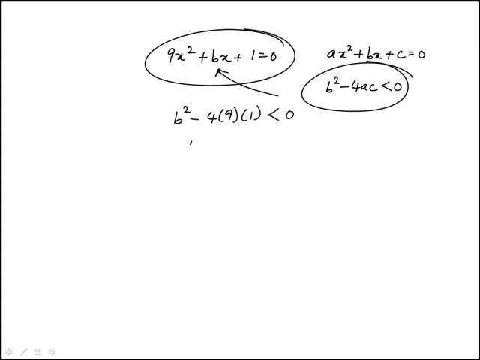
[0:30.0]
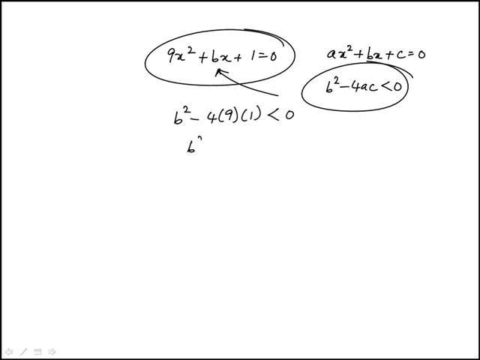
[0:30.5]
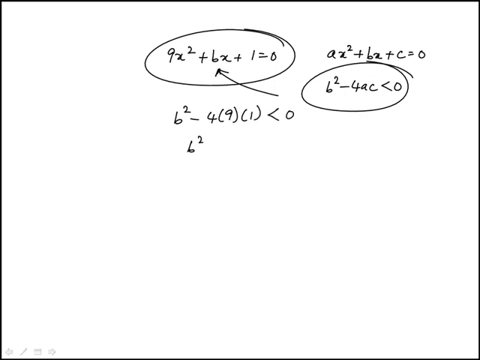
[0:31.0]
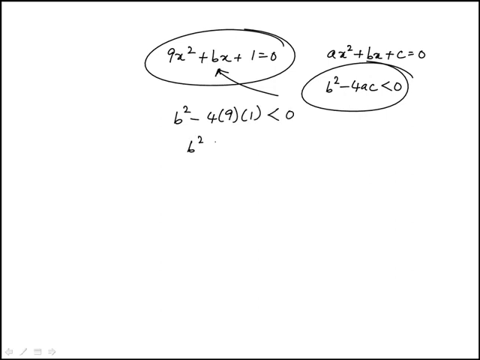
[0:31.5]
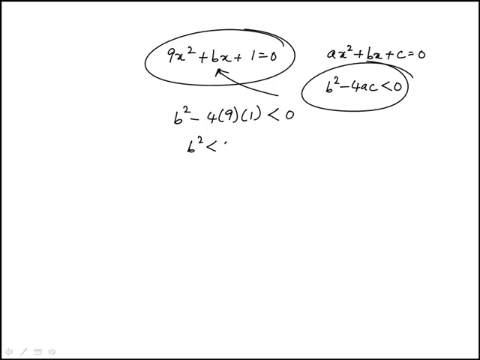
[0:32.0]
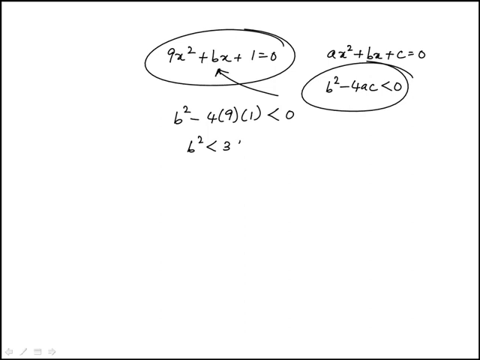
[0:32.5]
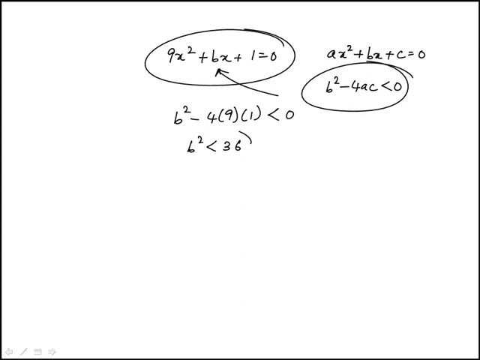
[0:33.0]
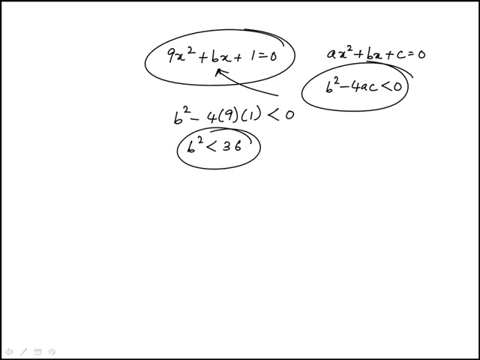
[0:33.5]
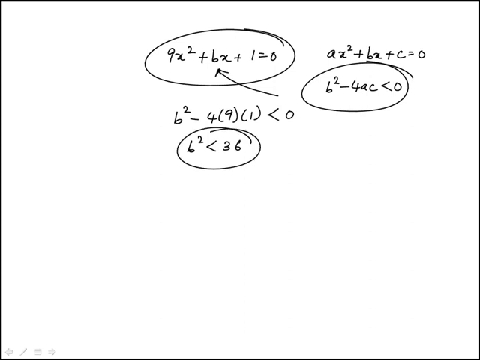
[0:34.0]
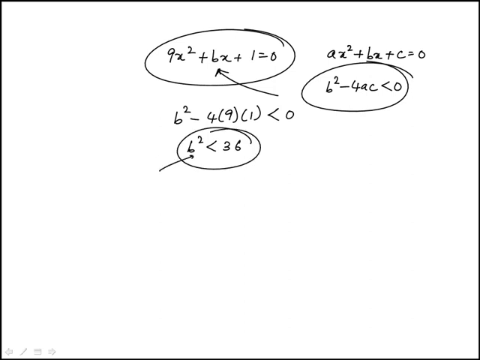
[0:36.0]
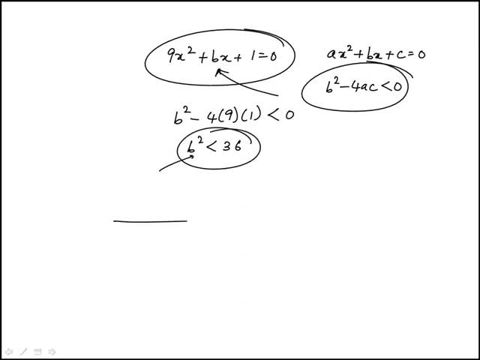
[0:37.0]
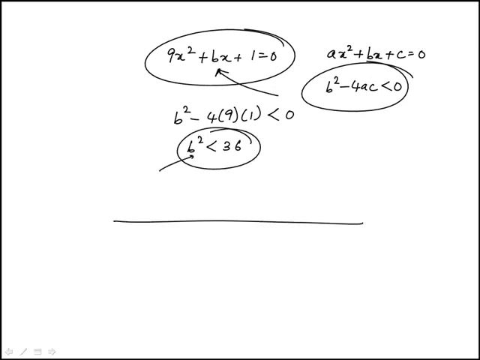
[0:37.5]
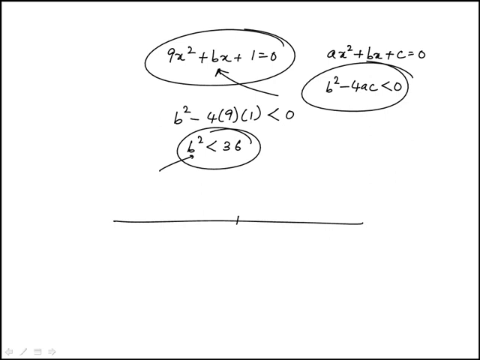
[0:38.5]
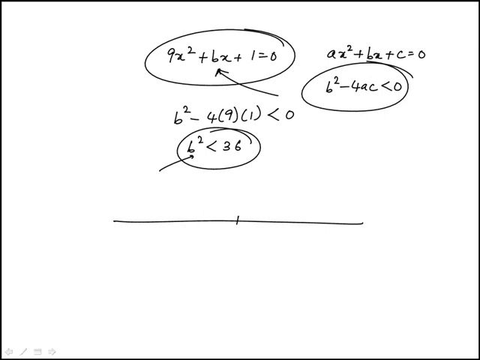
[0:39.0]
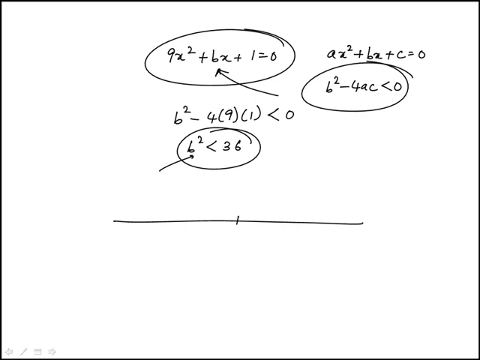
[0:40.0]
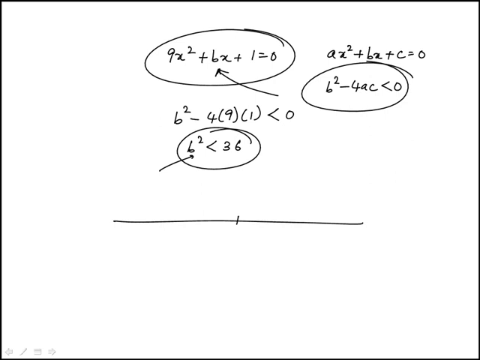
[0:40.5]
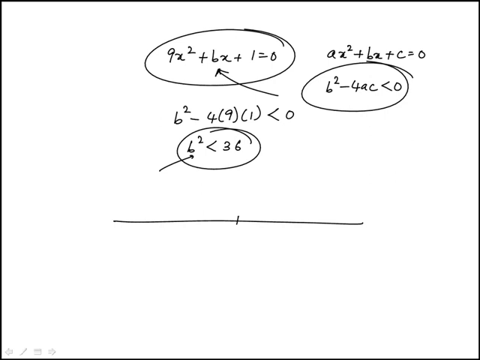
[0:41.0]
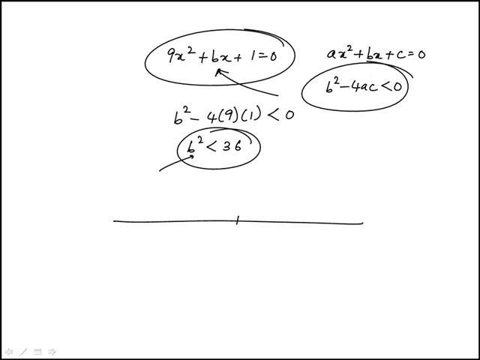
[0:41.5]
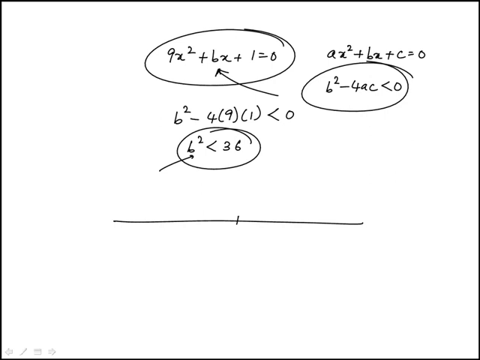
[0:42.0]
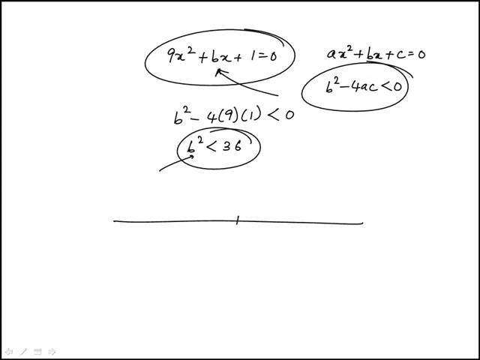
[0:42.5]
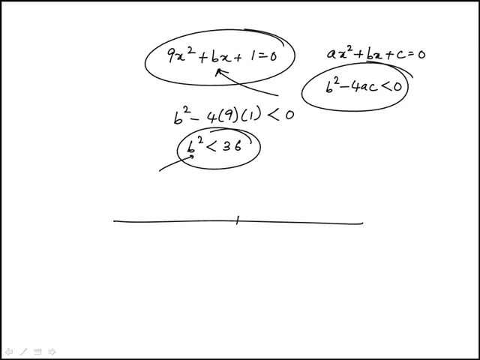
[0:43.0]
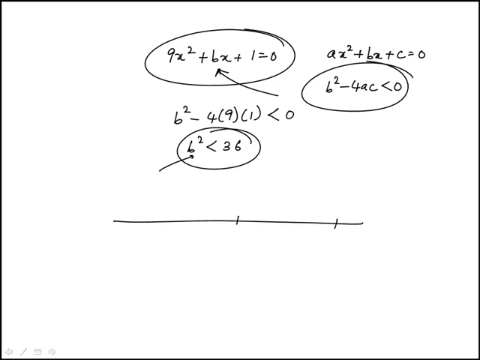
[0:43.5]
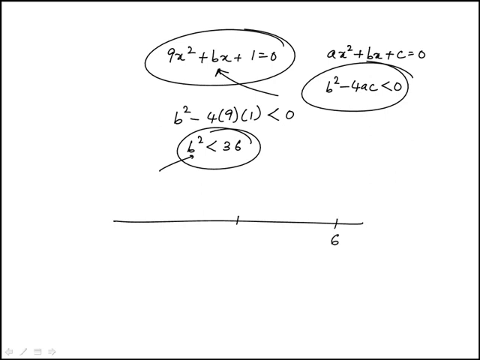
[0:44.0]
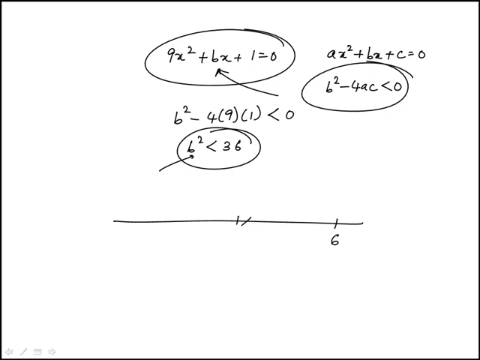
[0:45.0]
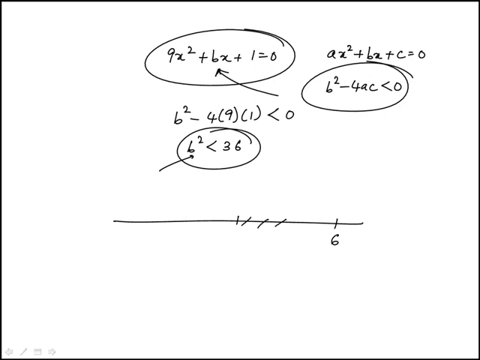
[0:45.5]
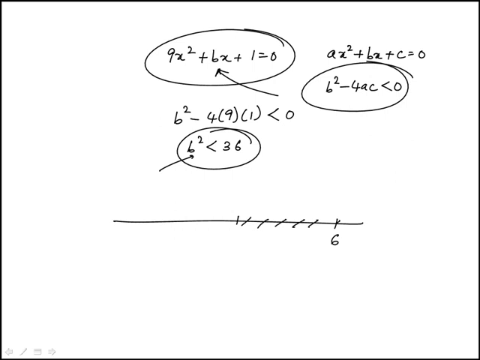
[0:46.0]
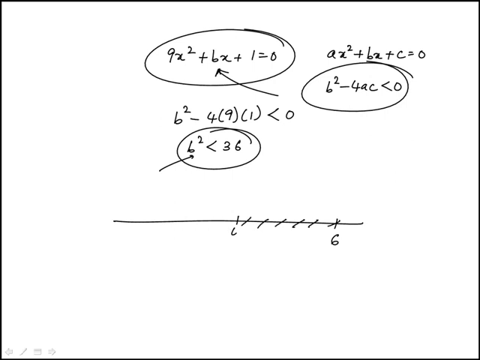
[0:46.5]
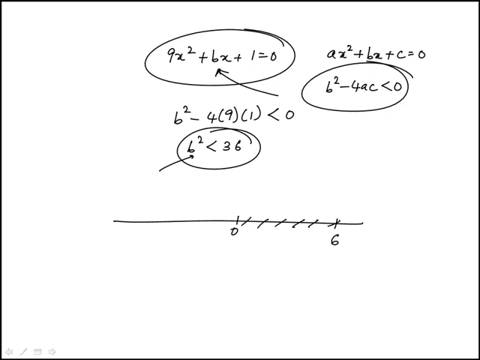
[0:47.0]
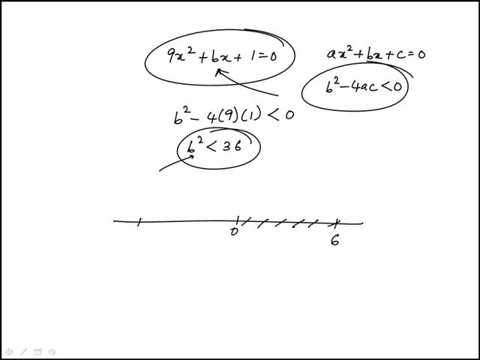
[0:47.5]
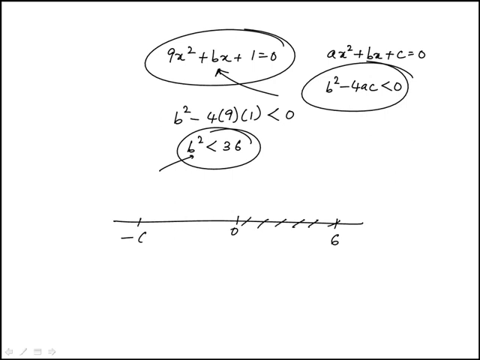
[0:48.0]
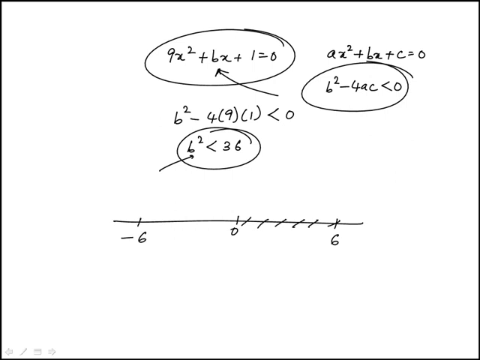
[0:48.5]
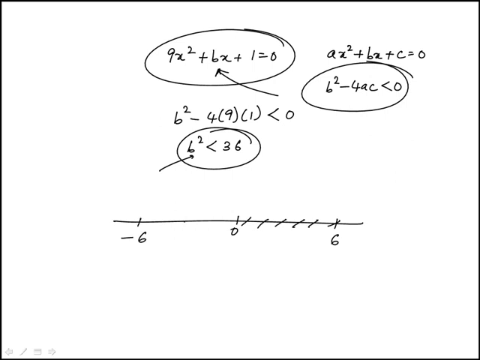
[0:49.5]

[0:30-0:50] Four equations written in black pen are on the white wallpaper; two of them are circled and the rest are not. Below the last equation, 6 to the power 2 minus 4 bracket 9 bracket 1 is greater than 0, another equation is written: 6 to the power 2 is greater than 36. It is circled right after, and an arrow is drawn pointing into the circle around it. Below this, a straight line is drawn, what seems to be a line graph, and digits and arrows are written on it. At one end of the line the digit 6 is written below, the middle is marked with a short line and labeled 0, and at the other end negative 6 is written.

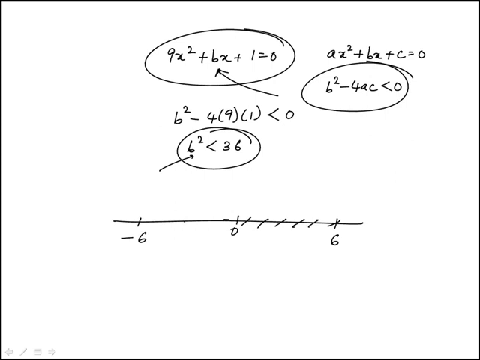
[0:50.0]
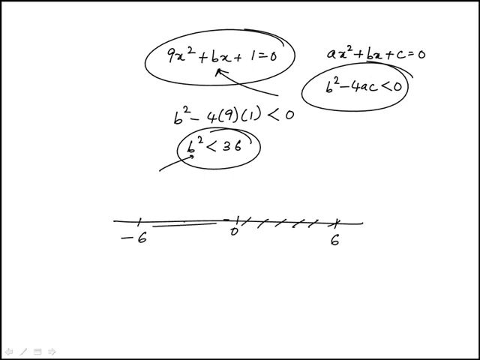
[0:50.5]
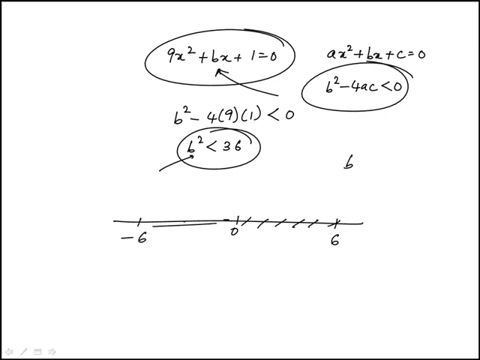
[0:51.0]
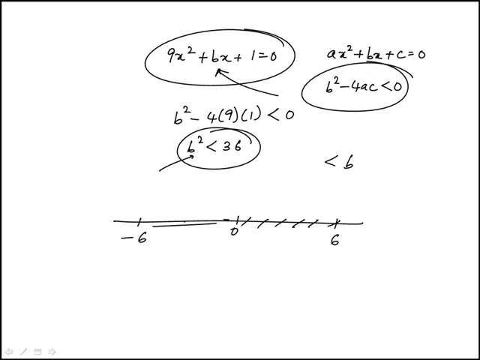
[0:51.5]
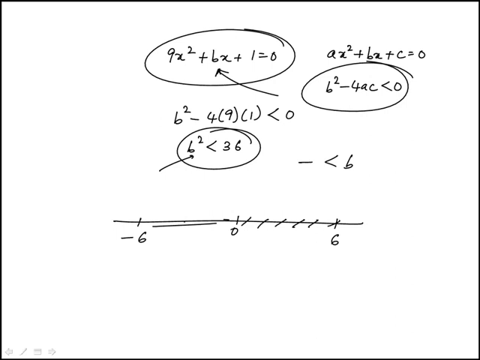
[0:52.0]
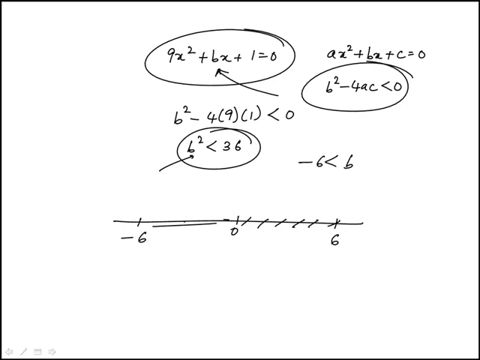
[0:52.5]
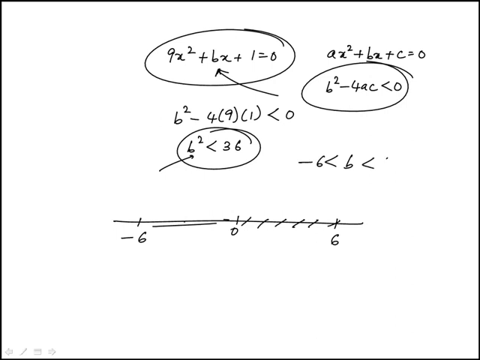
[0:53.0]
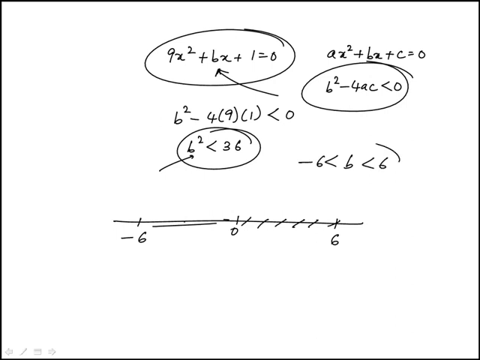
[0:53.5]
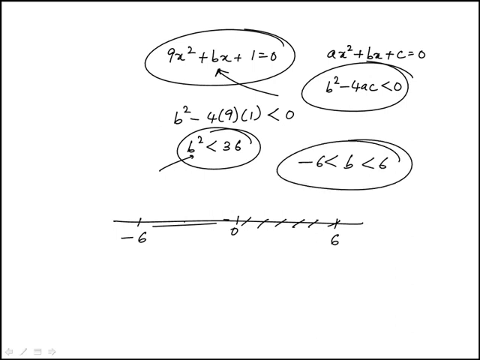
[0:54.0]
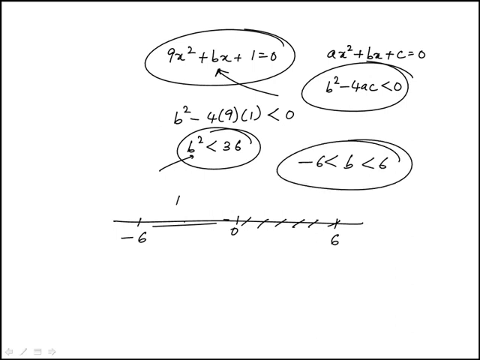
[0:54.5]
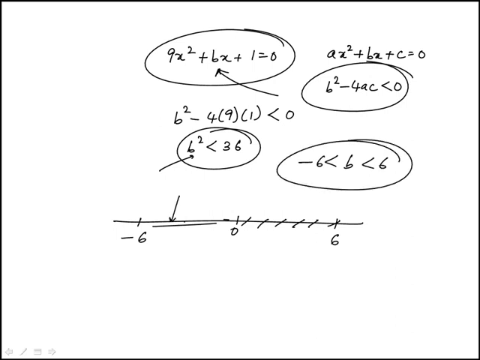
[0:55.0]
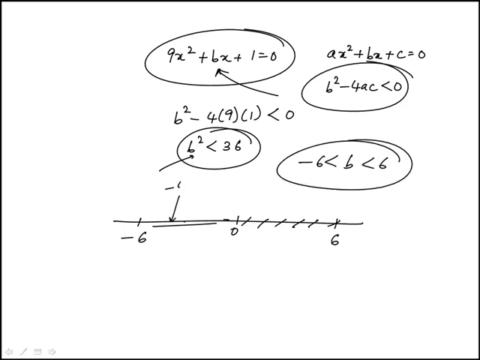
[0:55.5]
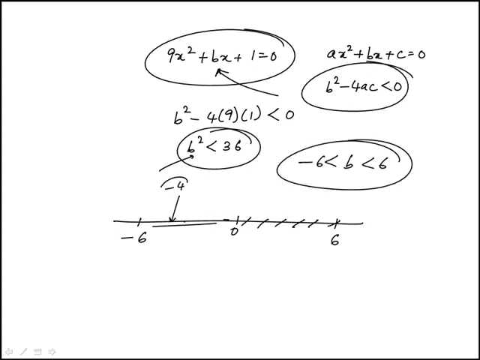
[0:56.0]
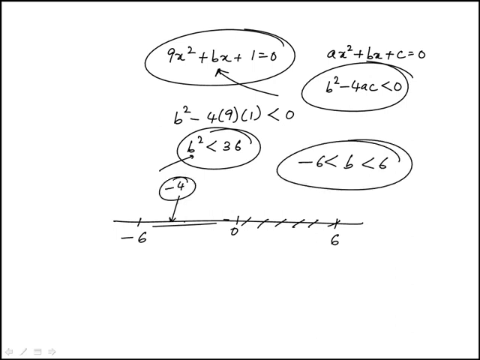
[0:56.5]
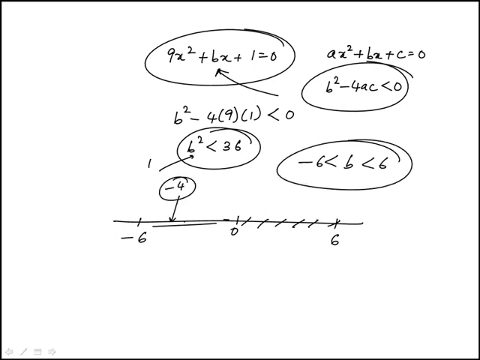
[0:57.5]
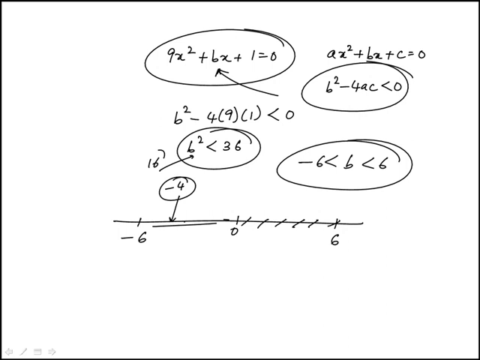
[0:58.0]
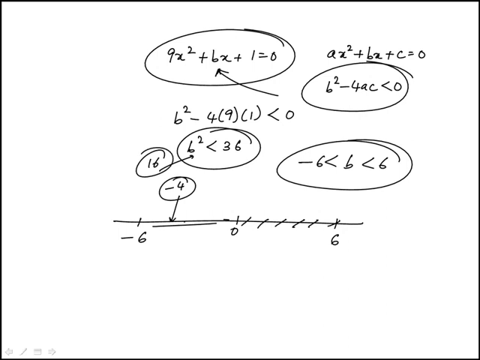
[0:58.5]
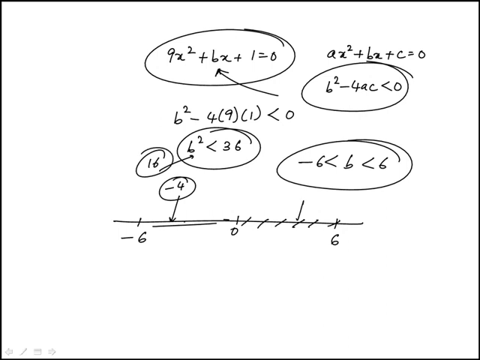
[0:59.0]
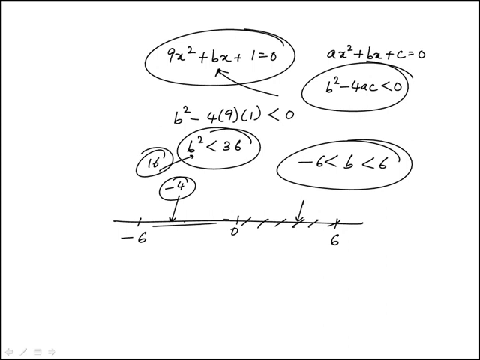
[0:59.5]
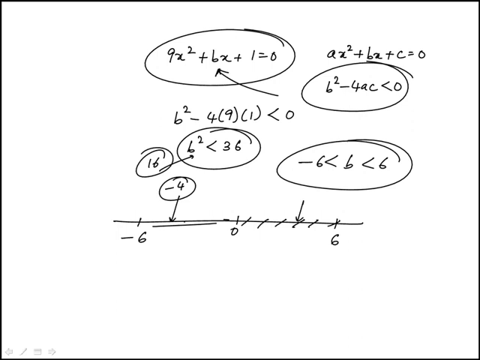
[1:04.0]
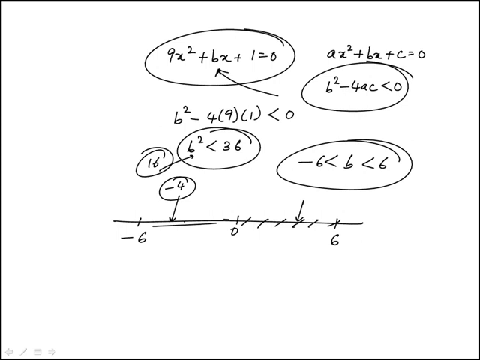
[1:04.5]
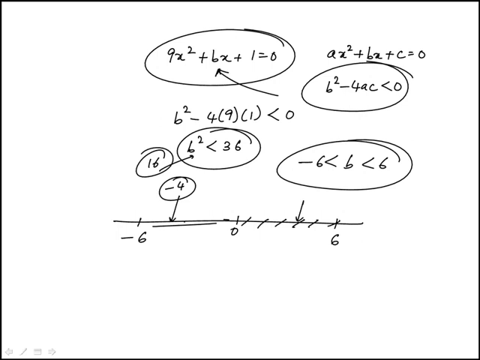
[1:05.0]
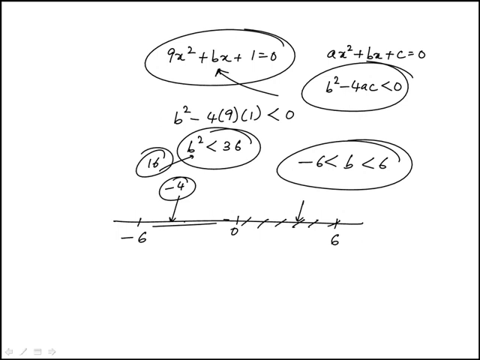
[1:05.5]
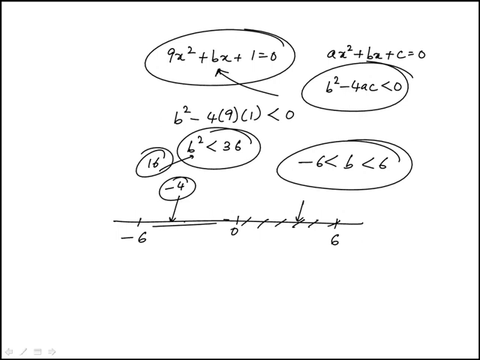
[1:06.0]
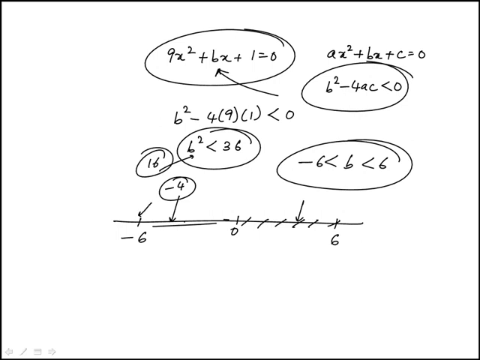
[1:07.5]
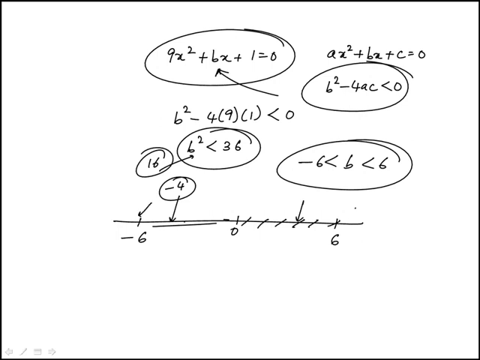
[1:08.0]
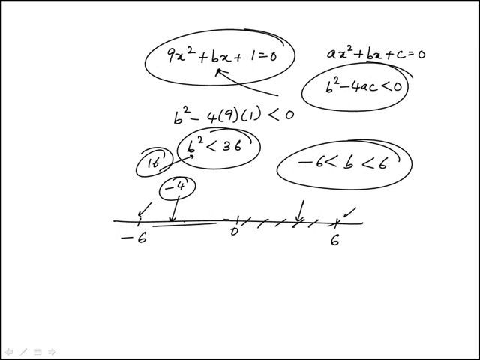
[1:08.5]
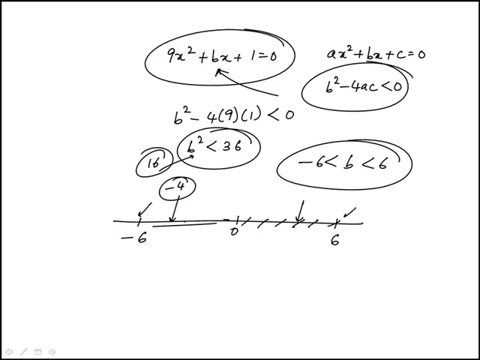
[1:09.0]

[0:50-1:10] With the line graph complete, 0 in the middle, 6 on the right and negative 6 on the left, another equation is written in black pen: negative 6 is greater than b is greater than 6. An arrow is then drawn pointing to the left-hand side of the line graph, where negative 4 is written and circled with the black pen. Above that, the equation 6 to the power 2 is greater than 36 is also circled, and next to it another circled number, 16, appears with an arrow pointing into the 6 to the power 2 is greater than 36 equation. Another arrow is then drawn on the line graph pointing to the right-hand side, 3 points away from 0.